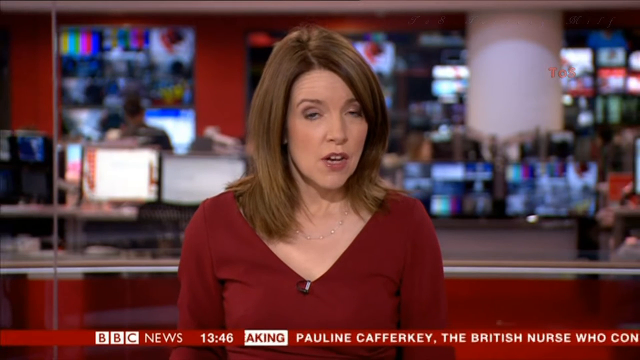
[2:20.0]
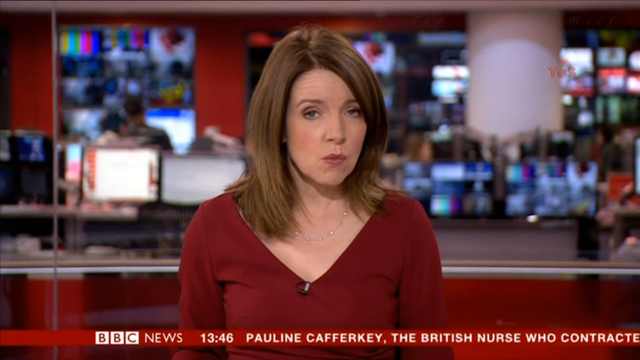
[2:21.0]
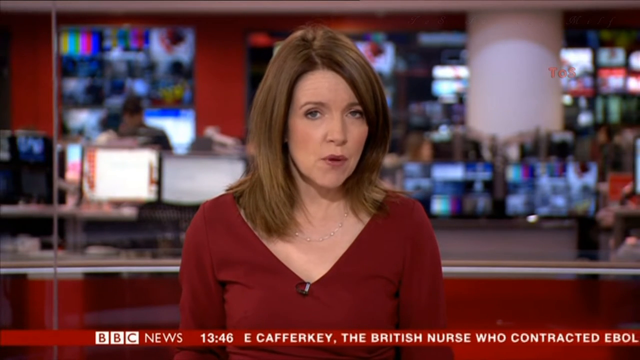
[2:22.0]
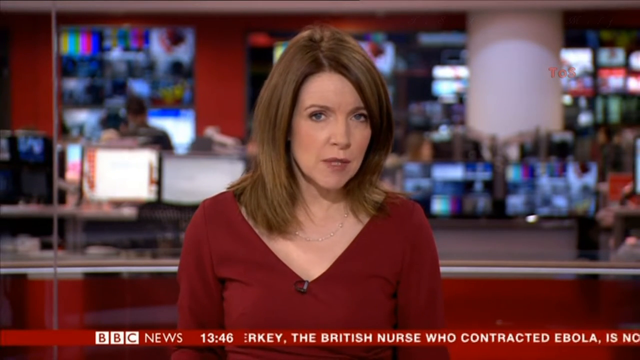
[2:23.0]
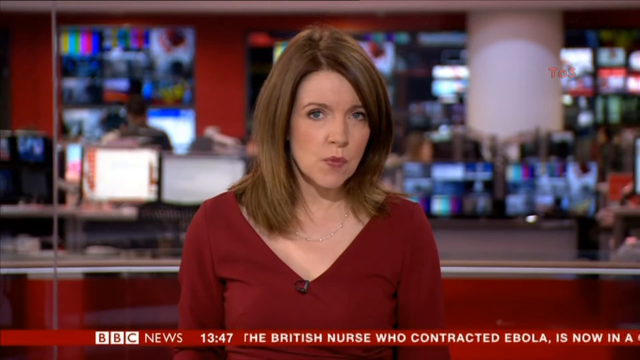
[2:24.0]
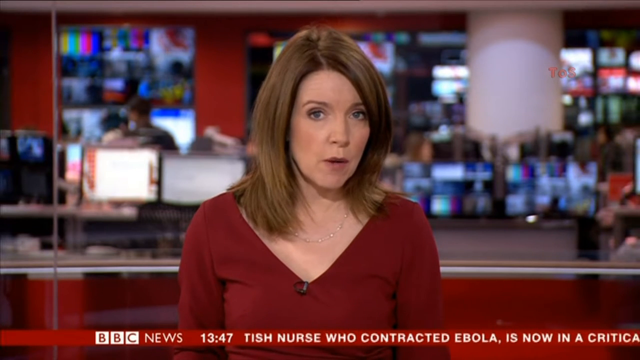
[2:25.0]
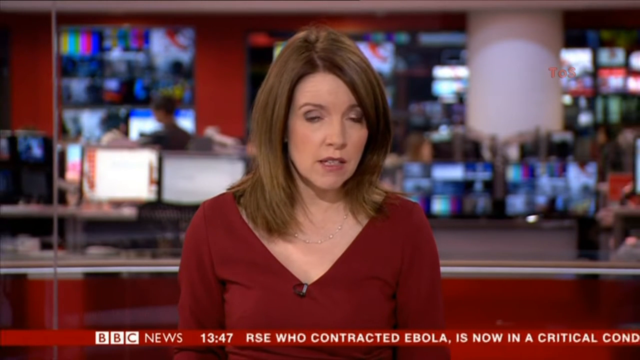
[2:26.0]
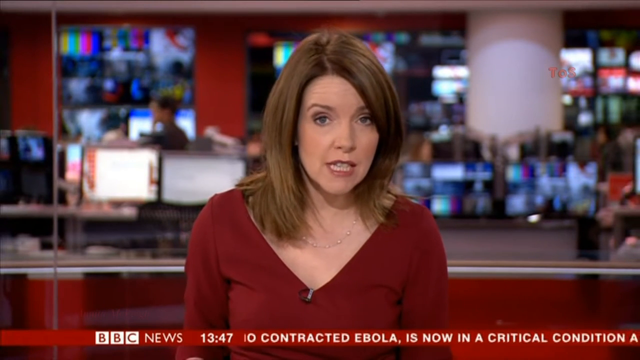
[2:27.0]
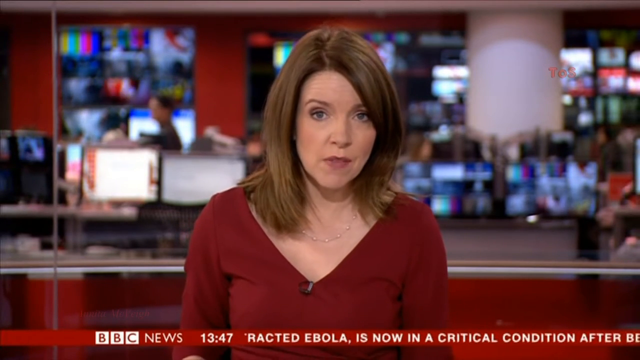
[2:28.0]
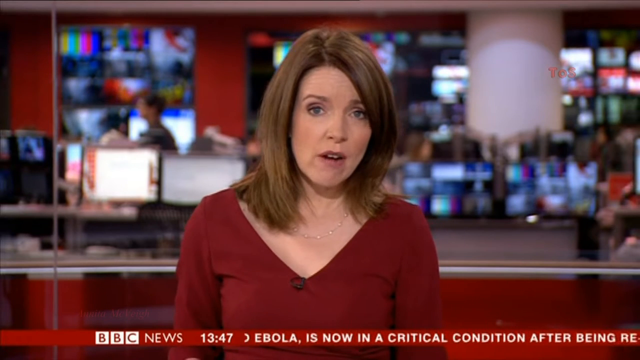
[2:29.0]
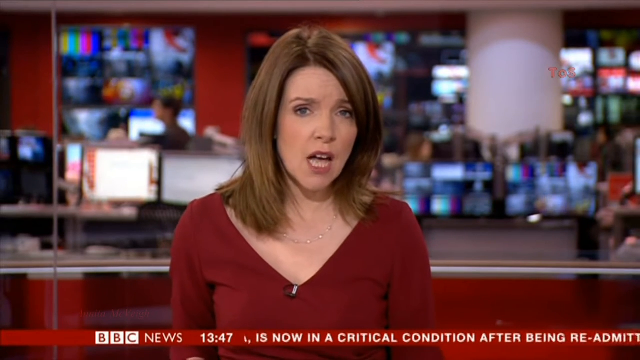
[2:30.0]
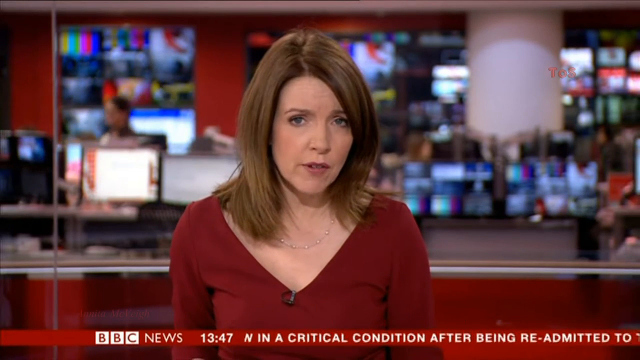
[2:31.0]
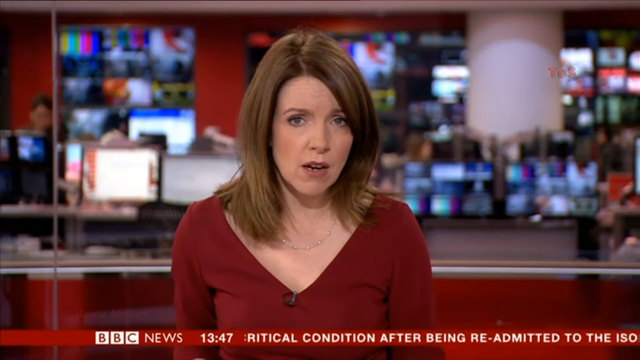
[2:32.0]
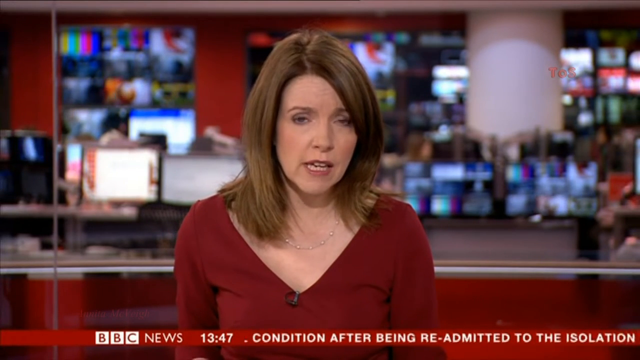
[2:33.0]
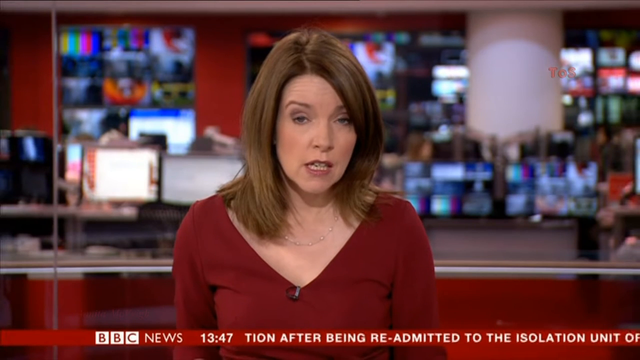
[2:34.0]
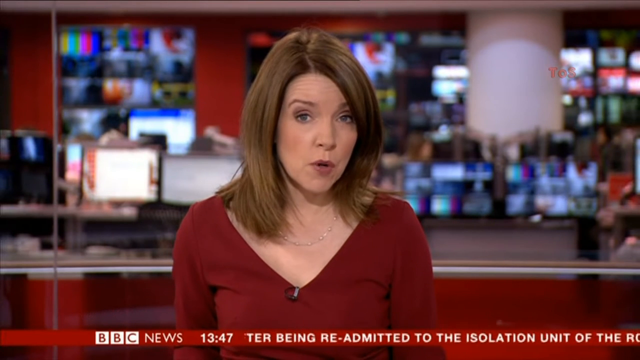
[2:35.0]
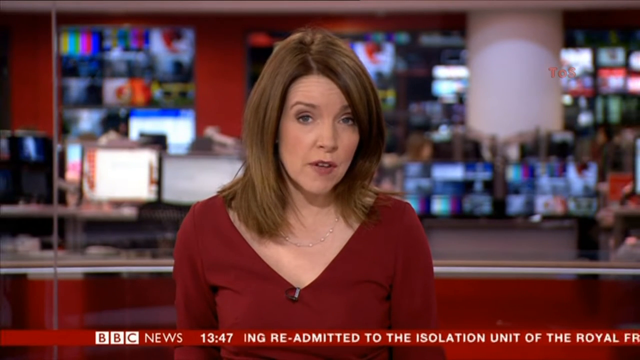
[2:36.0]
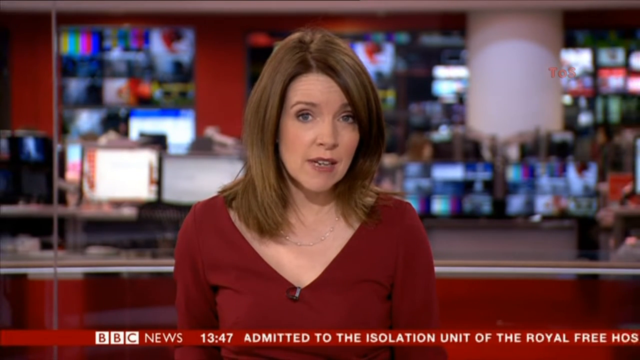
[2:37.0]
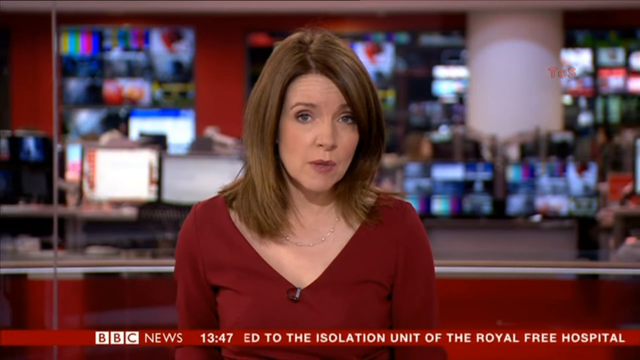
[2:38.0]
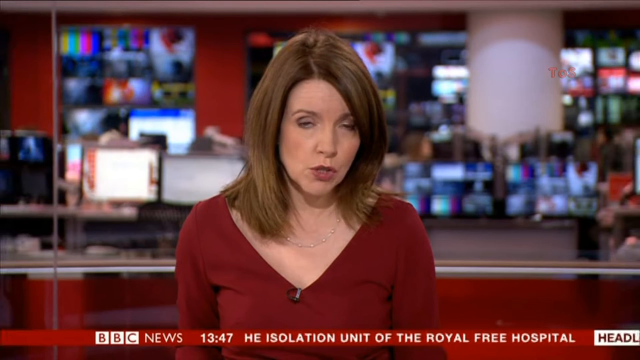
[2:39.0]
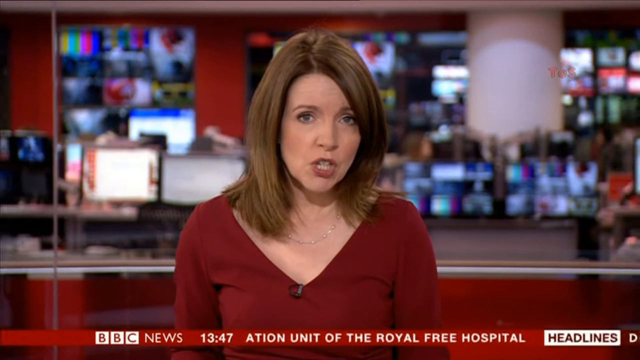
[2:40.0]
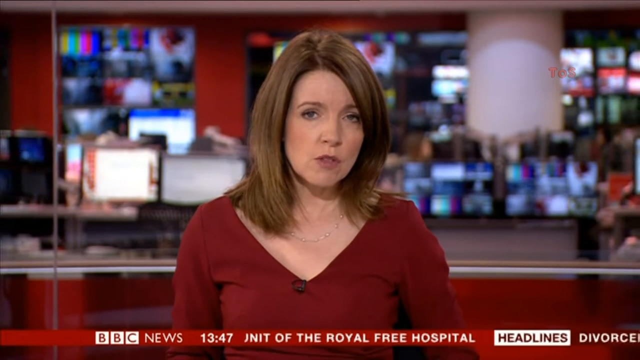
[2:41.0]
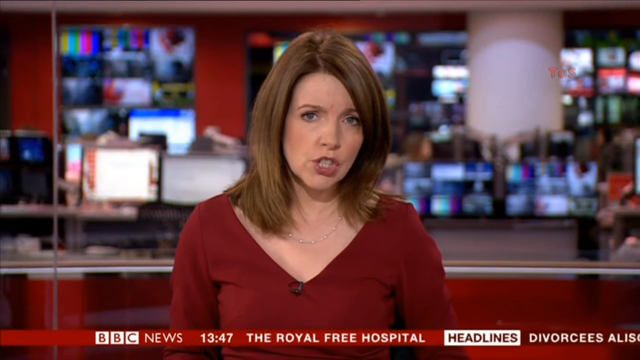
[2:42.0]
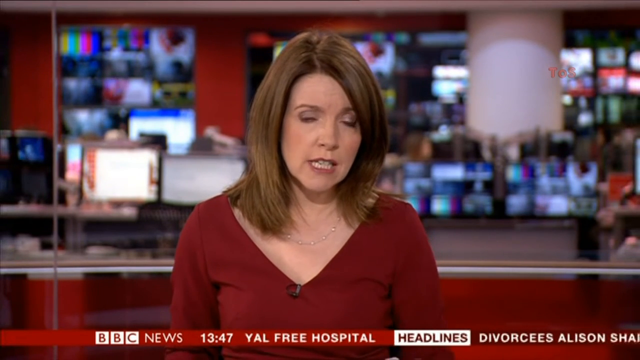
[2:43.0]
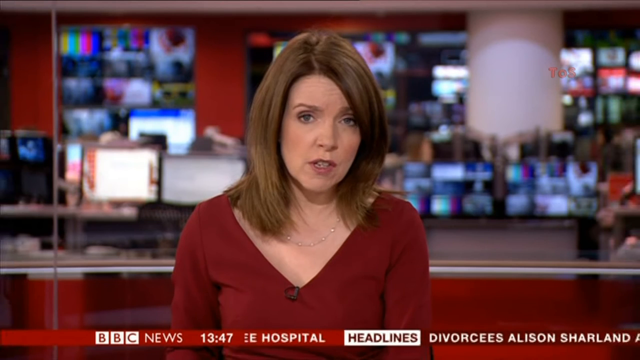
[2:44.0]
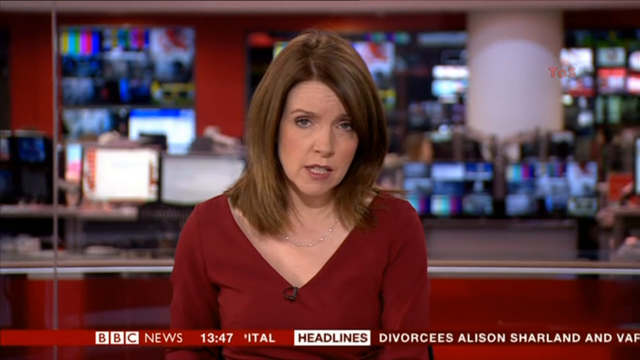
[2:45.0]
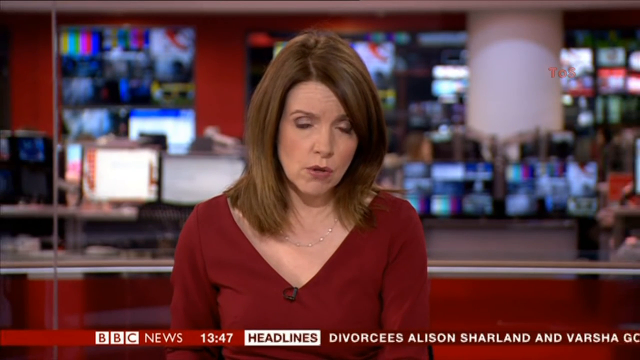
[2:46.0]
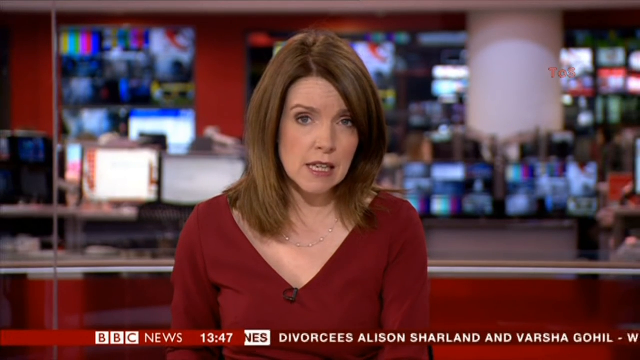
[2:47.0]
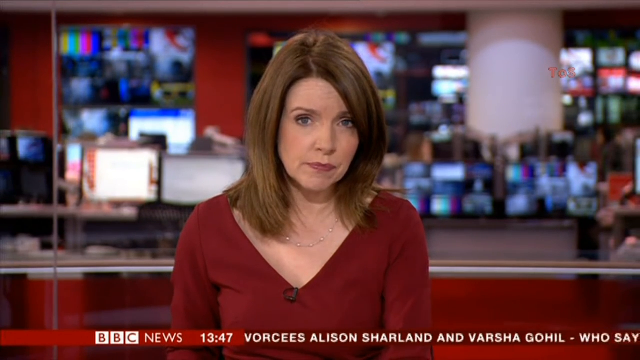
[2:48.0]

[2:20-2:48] In the newsroom, a woman who looks to be in her 40s is talking. She wears what seems to be a red dress, or possibly a red top, with a V-neck that exposes part of her chest, along with a necklace, and her hair rests on her shoulders. Monitors in the background are blurred out, and people moving around are also blurred. Information is displayed across the bottom of the screen, with the "BBC News" logo, the time "13:47", and headlines. She seems to be sitting at a desk, barely moving her hands, and seems serious about what she is talking about.